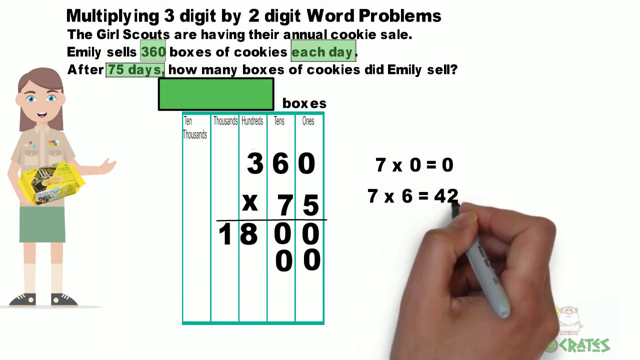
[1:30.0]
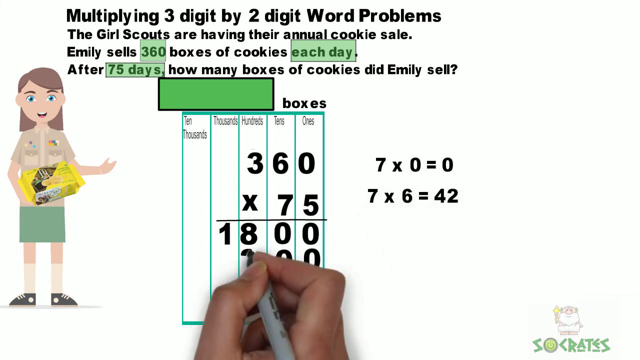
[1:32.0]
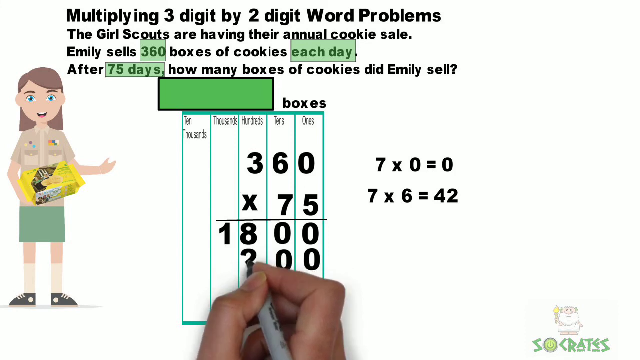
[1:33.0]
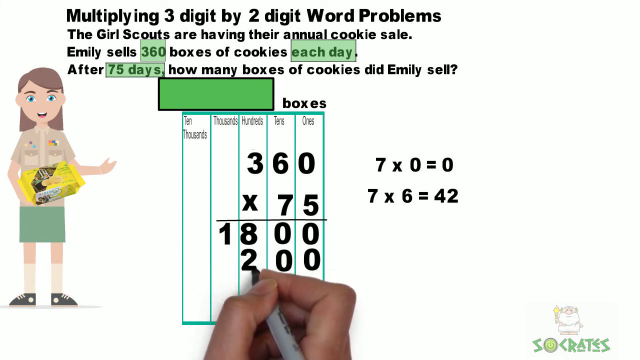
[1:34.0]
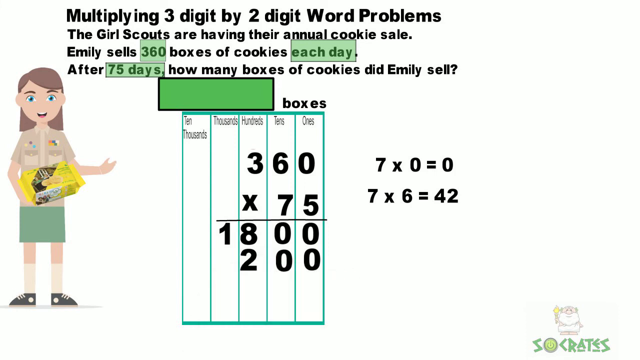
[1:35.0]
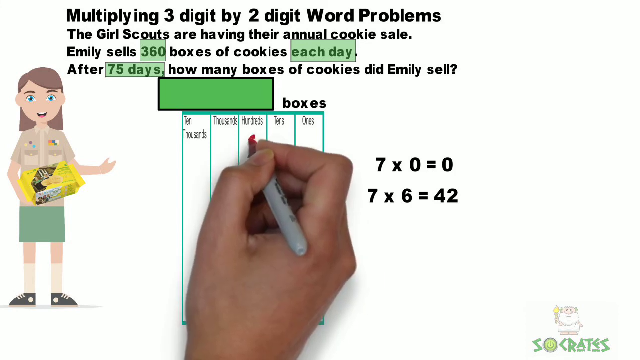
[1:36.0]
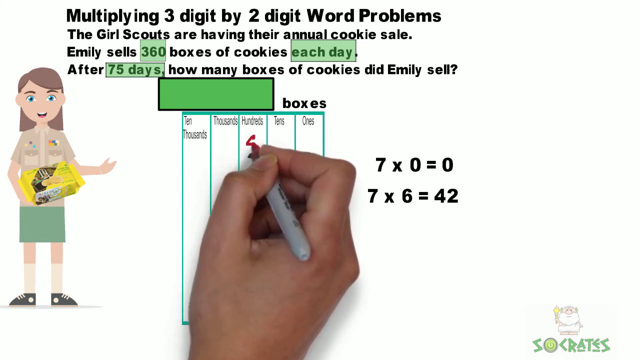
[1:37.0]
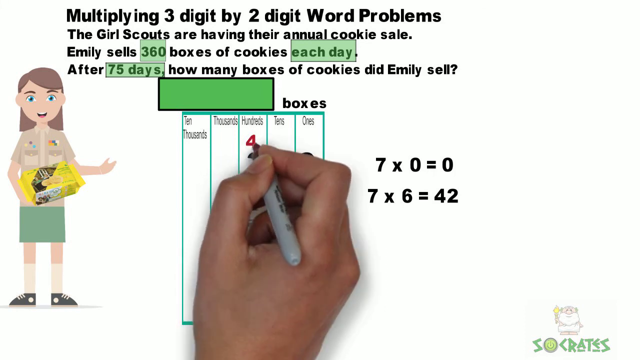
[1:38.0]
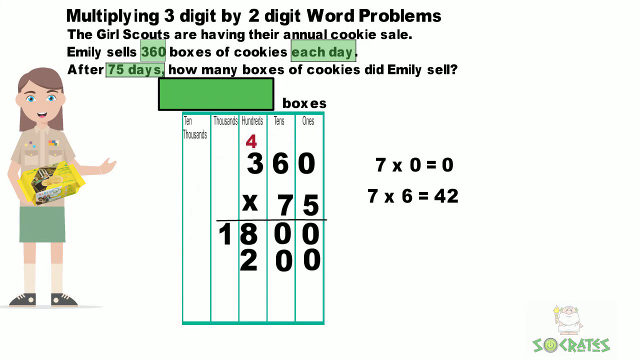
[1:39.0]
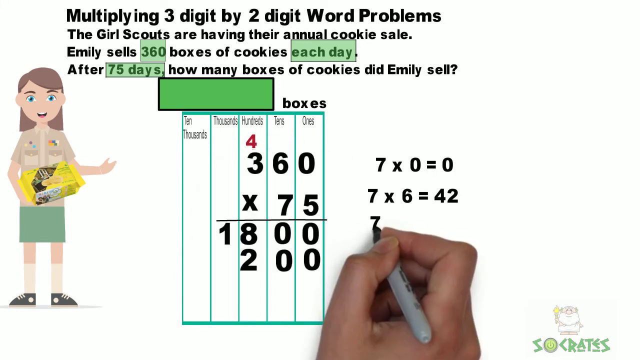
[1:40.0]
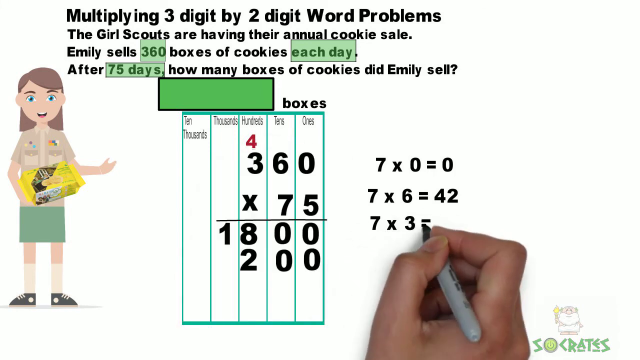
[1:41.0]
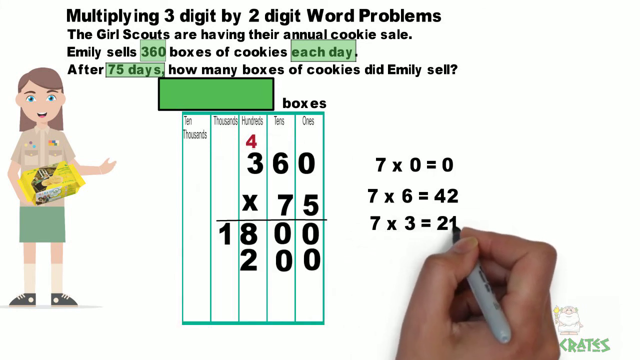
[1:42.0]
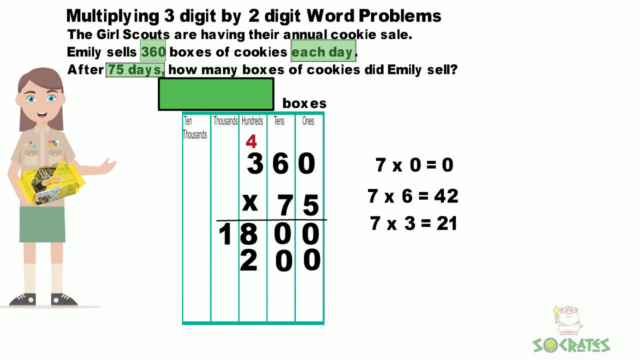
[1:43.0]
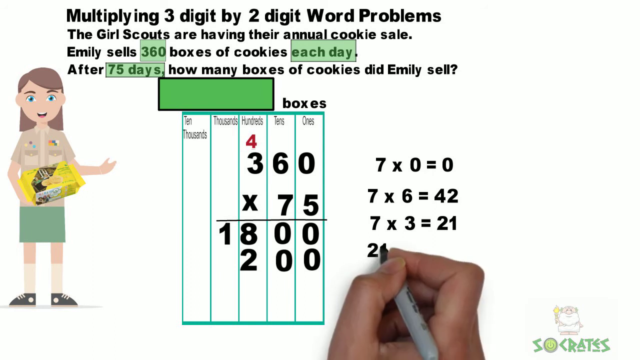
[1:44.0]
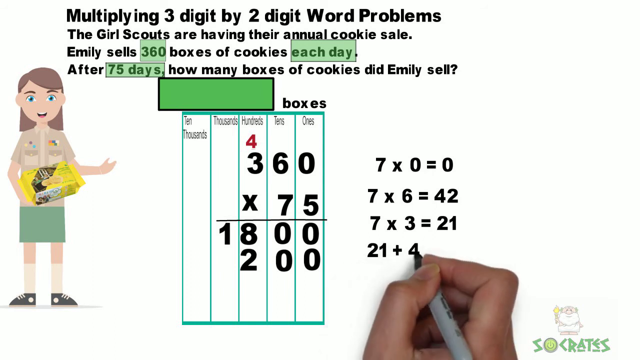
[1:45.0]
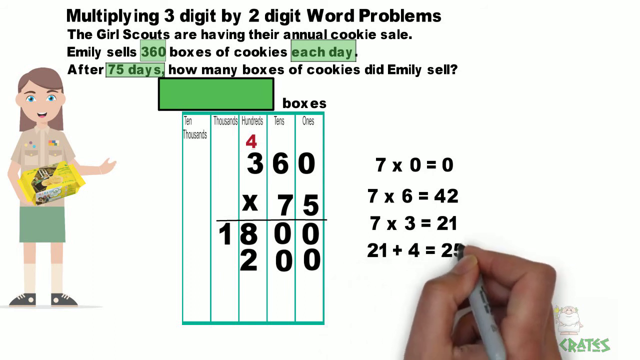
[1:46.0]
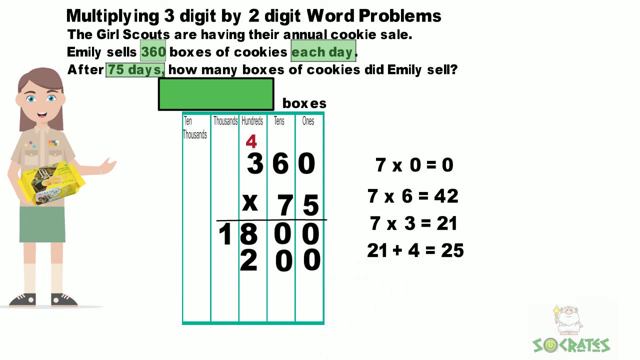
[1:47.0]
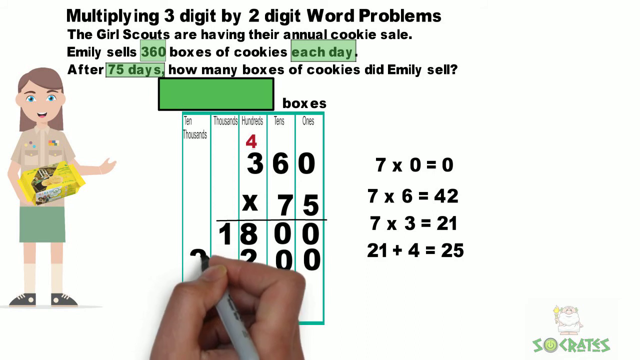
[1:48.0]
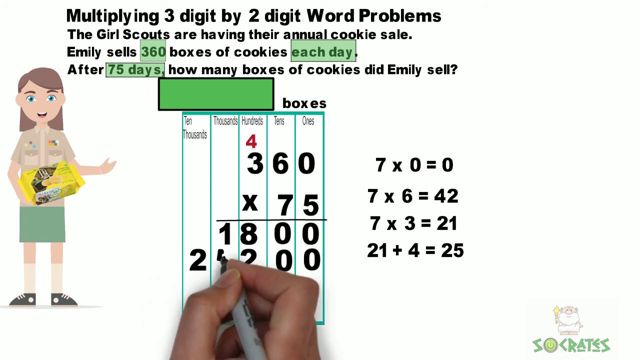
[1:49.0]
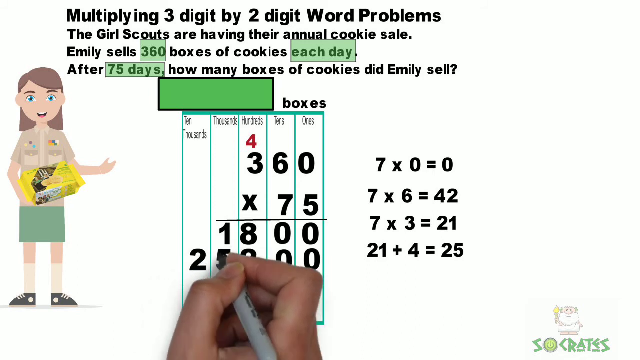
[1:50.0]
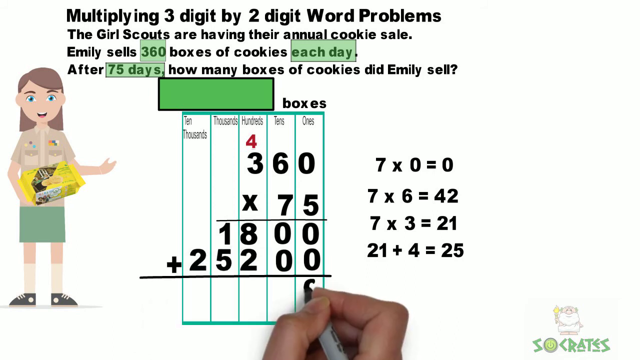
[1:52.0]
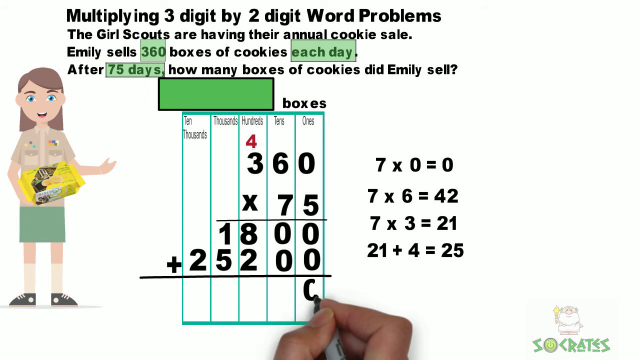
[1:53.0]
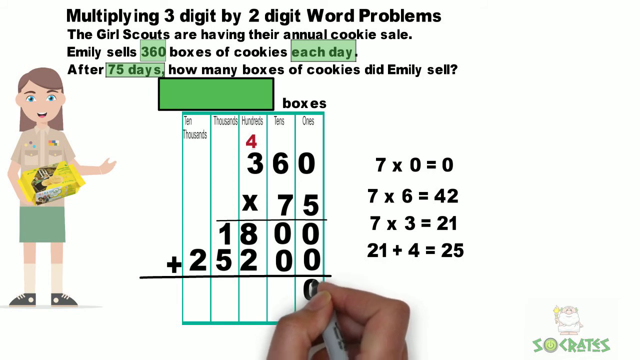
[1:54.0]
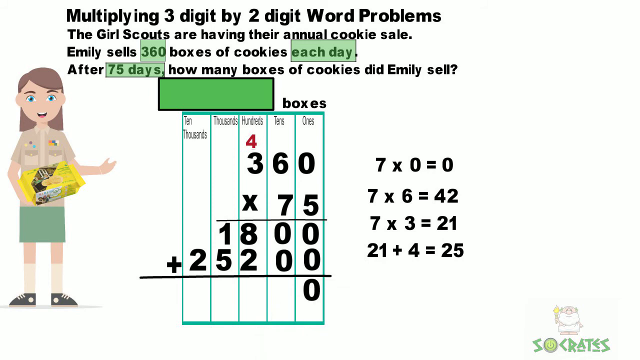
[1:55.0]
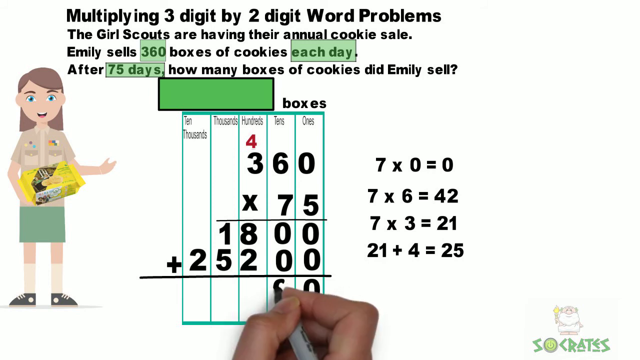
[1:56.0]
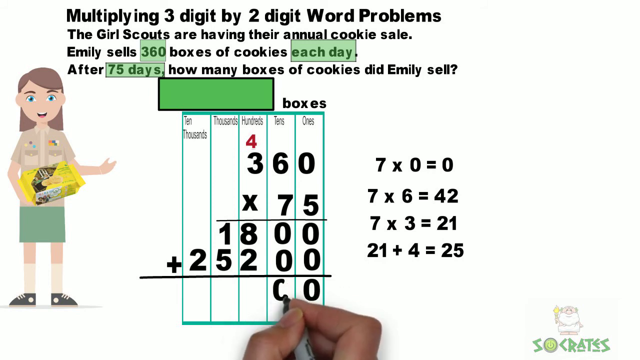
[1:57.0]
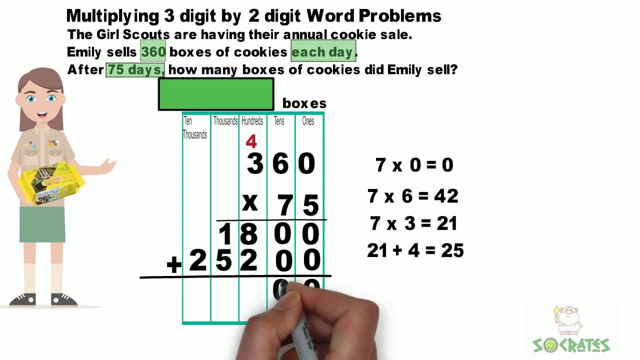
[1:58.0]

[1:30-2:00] A word problem appears against a white background; it looks to be for a math class. At the top of the screen in black text are the words "multiplying three digit by two digit word problems. The Girl Scouts are having their annual cookie sale. Emily sells 360 boxes of cookies each day. After 75 days, how many boxes of cookies does Emily sell?" "360 each day" and "75 days" are highlighted with green rectangular boxes around them. Underneath the word problem is another, empty green rectangular box with the word "boxes" next to it. To the left is a cartoon image of a Girl Scout in a traditional Girl Scout uniform, and next to her is a table where a math problem is being worked. The table shows 360 times 75, with 1800 beneath it and 200 beneath the 1800. To the right, in black text, are 7 times 0 equals 0, 7 times 6 equals 42, and 7 times 3 equals 21, followed by 21 plus 4. A 25 is then written next to the 200 below the 1800. A 4 is written in red above the 360, and under 25,200 there is an underline where 0 0 has been written.